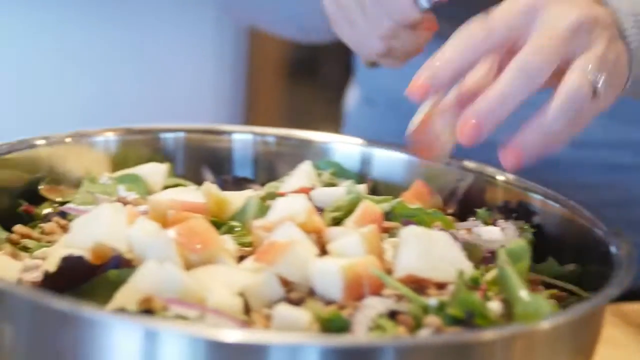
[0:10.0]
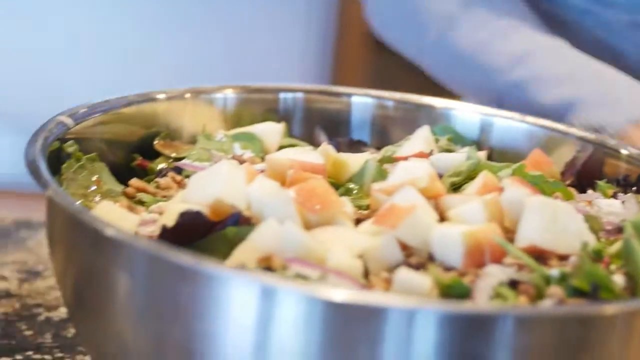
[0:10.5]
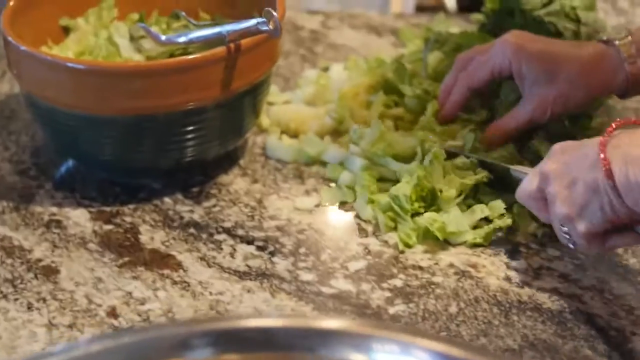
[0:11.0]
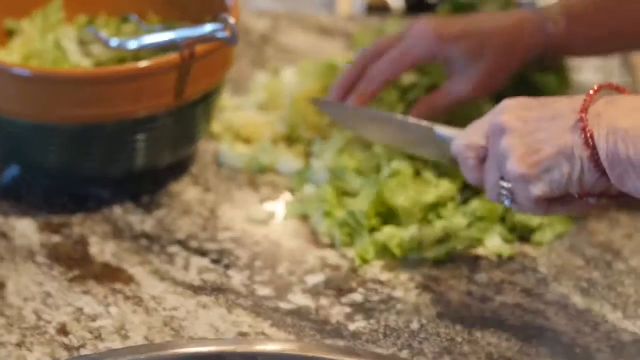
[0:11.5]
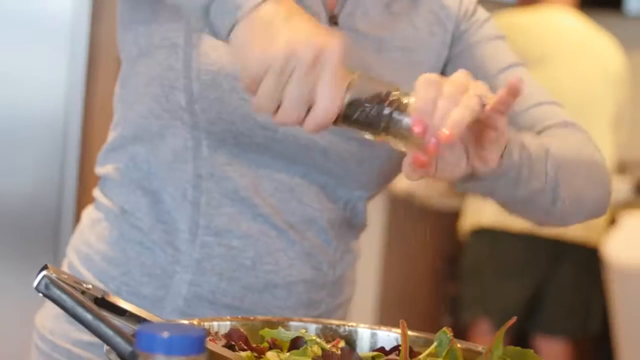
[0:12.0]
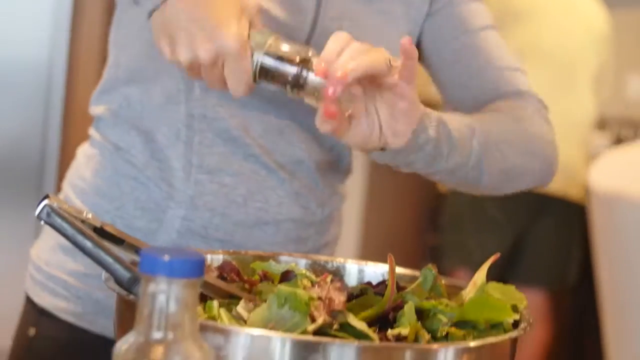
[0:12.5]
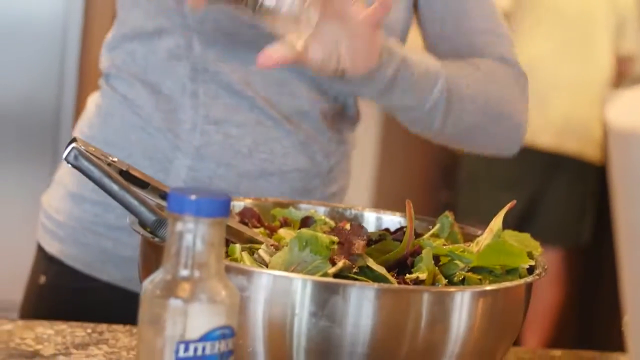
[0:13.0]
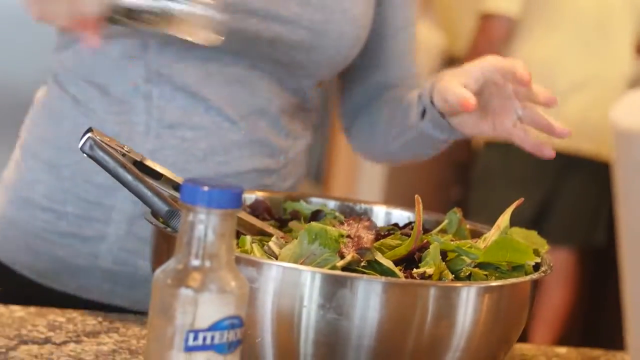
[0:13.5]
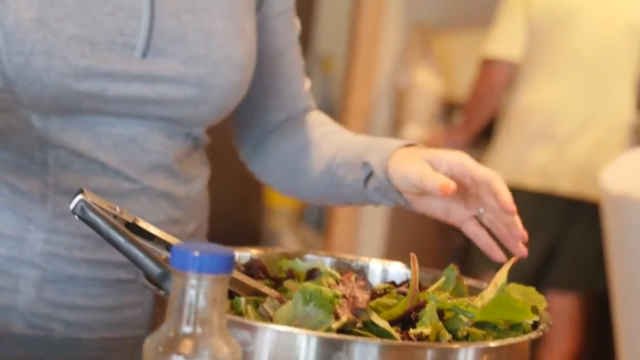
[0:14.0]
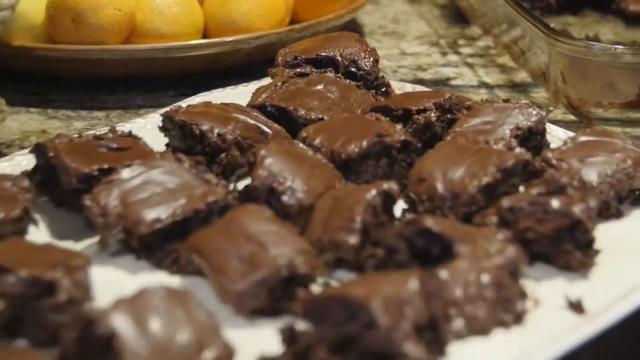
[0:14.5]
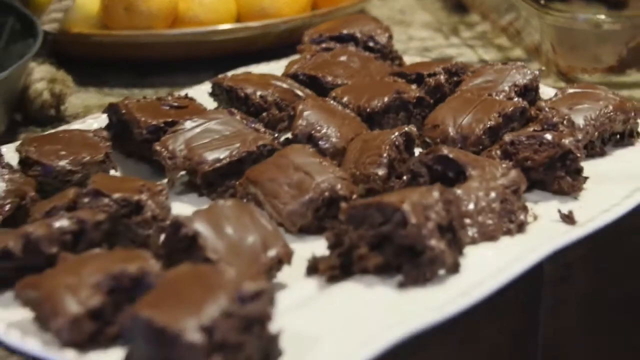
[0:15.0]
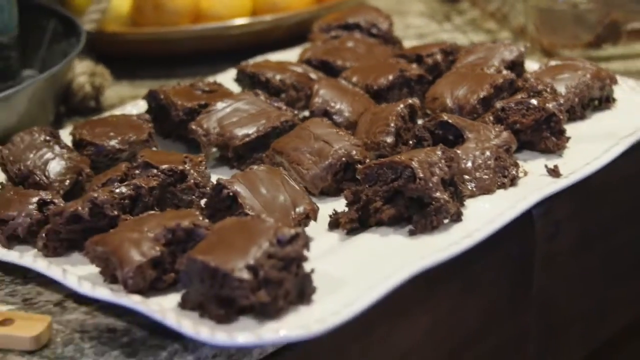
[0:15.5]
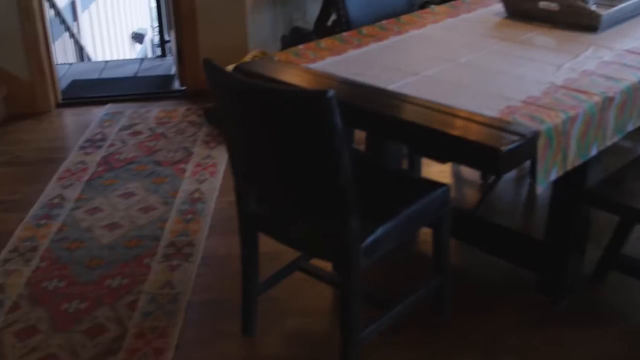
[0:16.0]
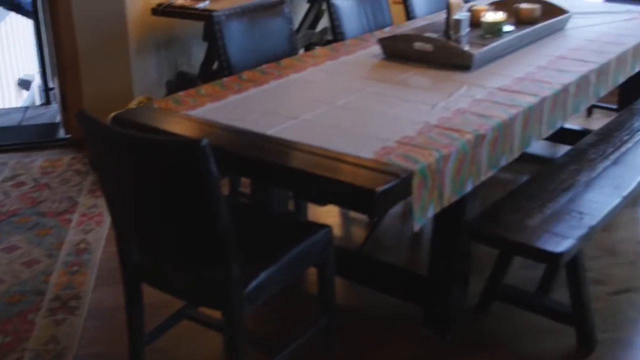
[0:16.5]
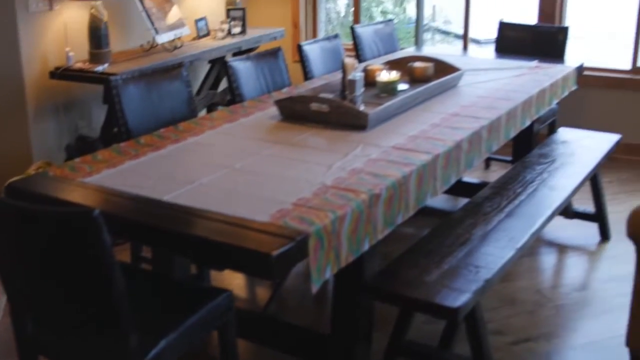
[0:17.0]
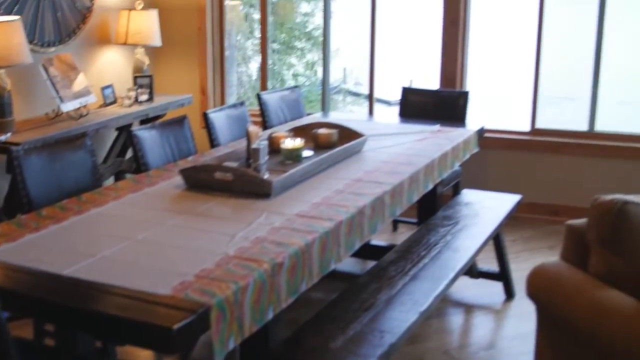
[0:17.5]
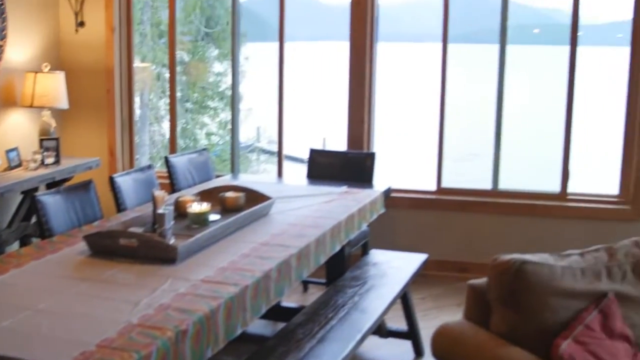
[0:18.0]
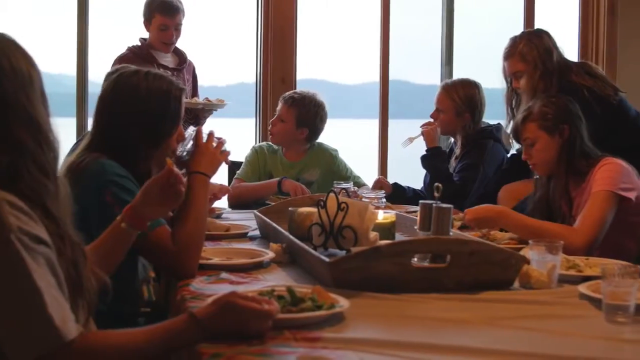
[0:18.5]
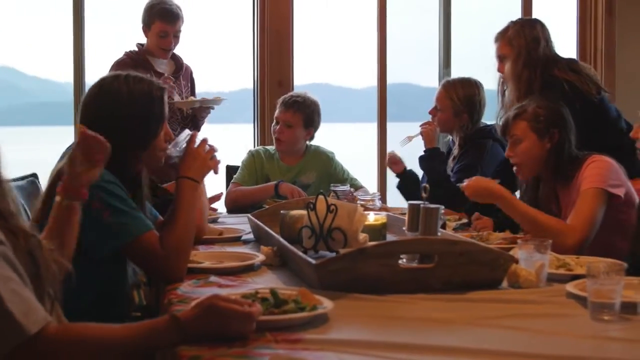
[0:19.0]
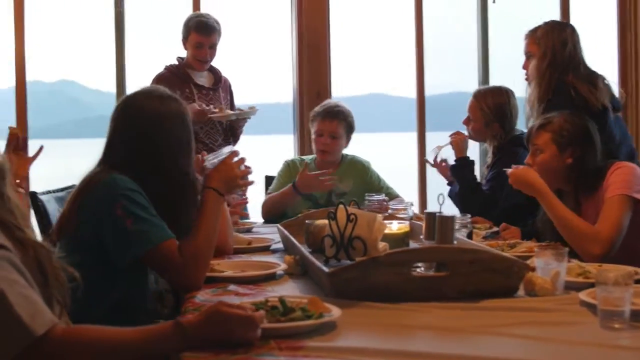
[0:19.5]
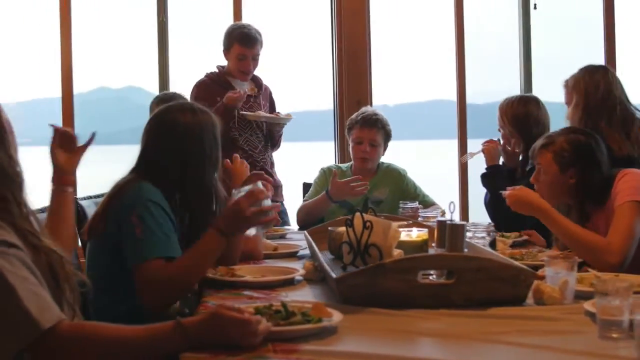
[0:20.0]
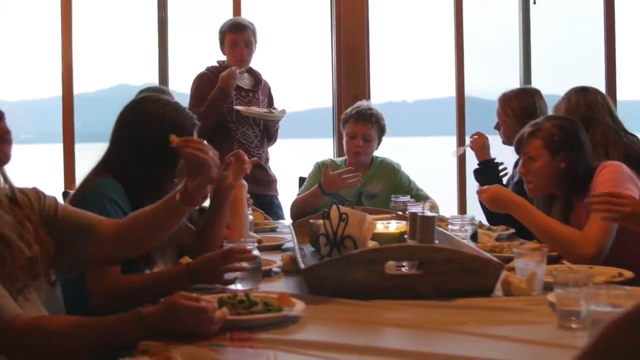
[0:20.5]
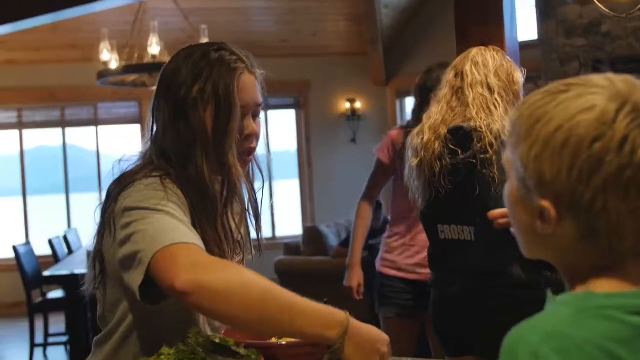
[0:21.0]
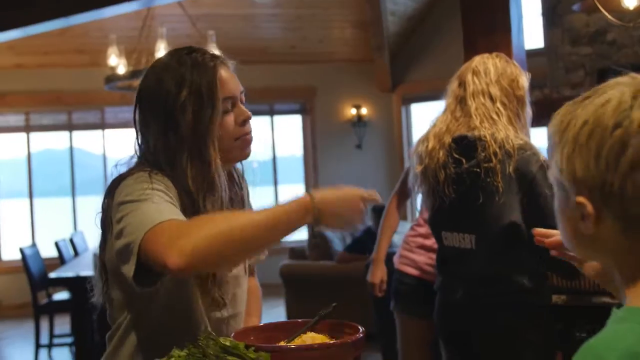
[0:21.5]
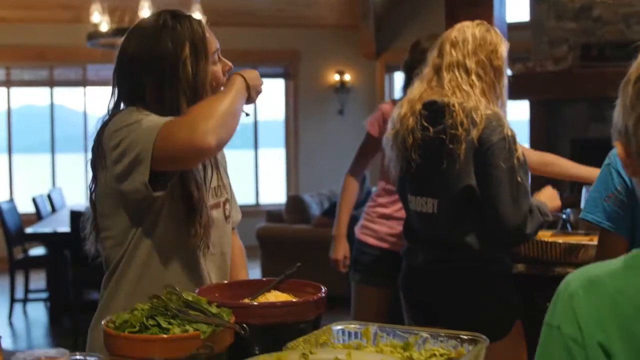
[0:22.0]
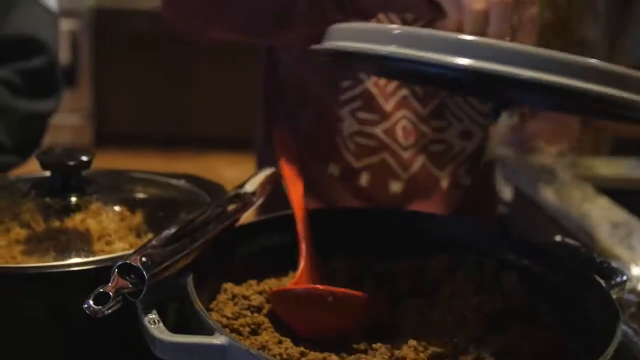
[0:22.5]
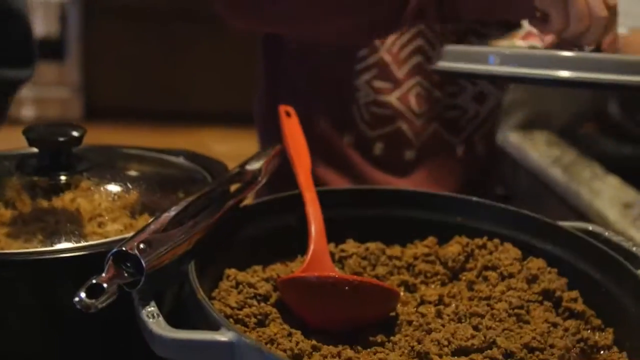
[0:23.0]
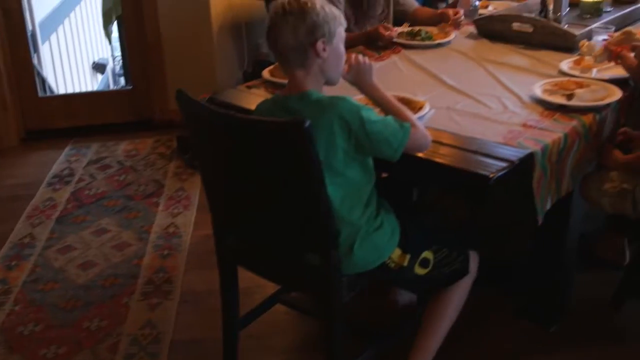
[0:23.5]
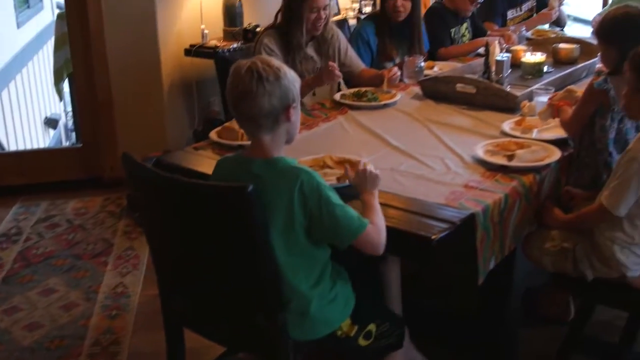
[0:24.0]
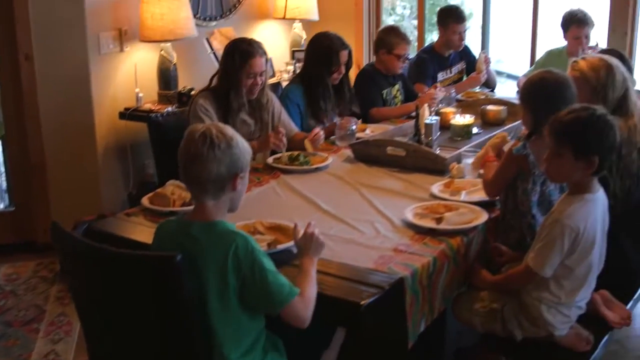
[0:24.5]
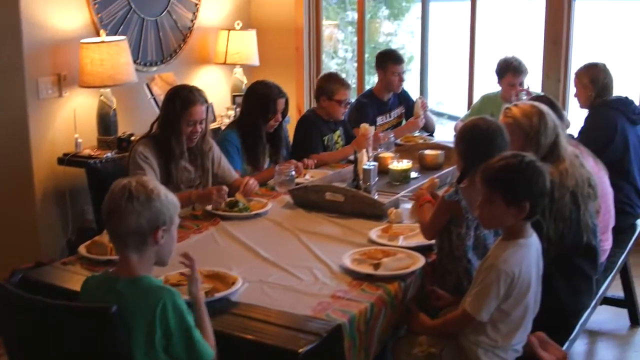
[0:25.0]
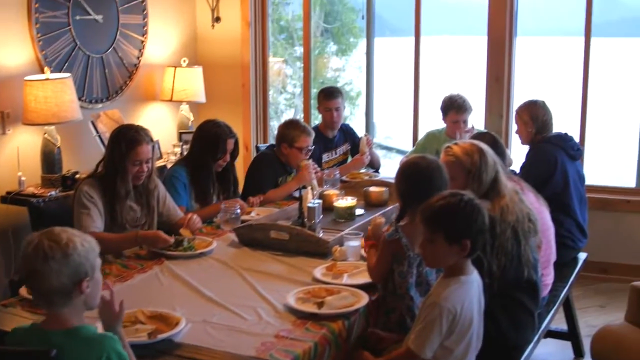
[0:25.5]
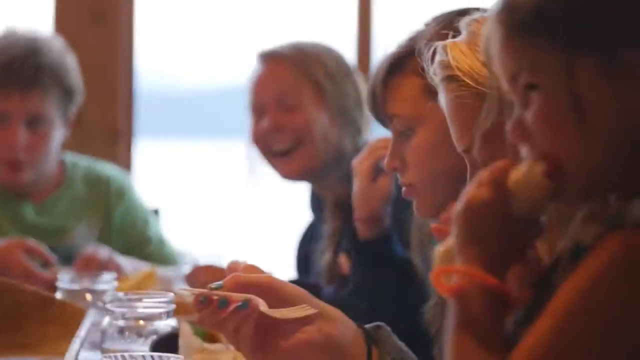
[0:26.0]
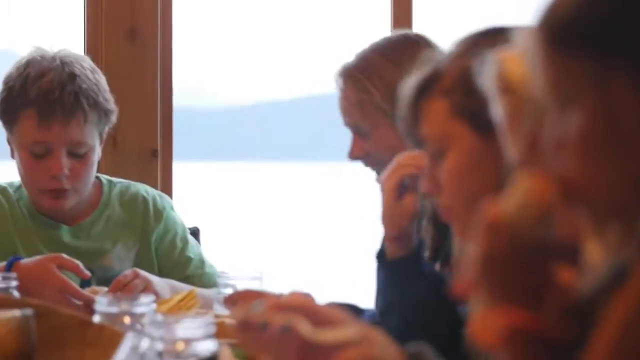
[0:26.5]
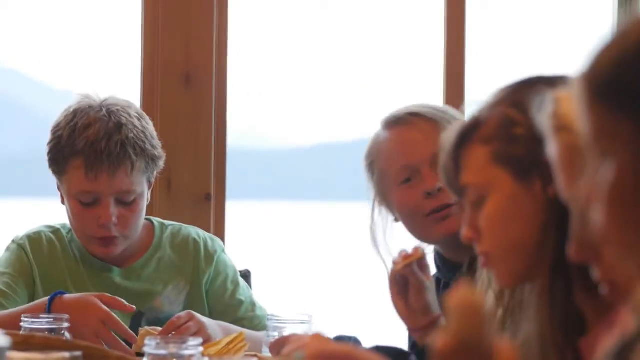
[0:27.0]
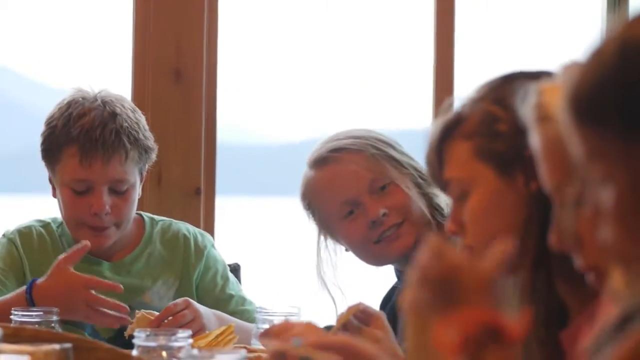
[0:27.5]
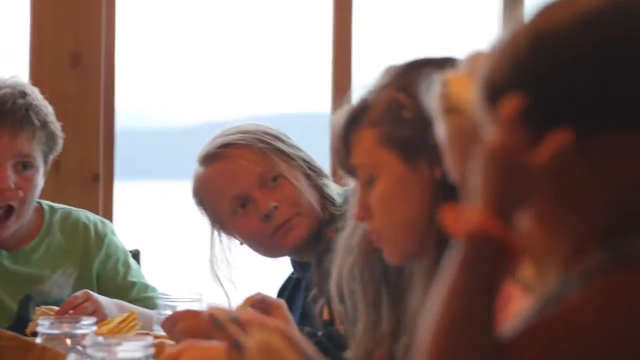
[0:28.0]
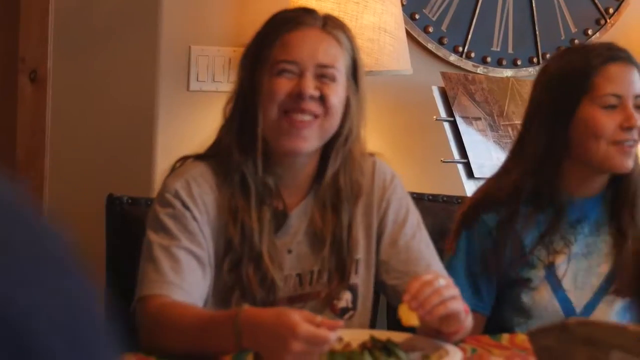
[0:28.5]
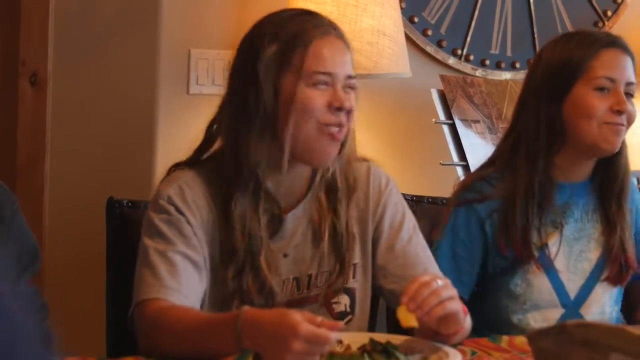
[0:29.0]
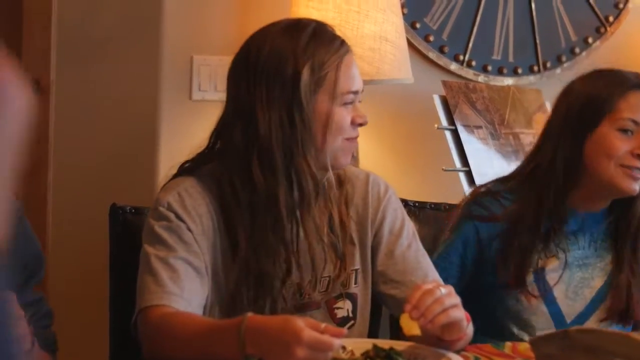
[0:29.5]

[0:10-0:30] She chops lettuce and adds salt and pepper. A tray with brownies appears. Then a long table with a tablecloth is shown beside big windows; outside there is a lake with mountains in the background, and the sky is visible in the daytime. Children, teenagers, are all around the table. In the middle of the table is a tray with napkins, salt and pepper, and each of them has a white plate in front of them. One is standing up with his plate as they eat. Someone takes the lid off the meat, and then the group is back at the table, laughing and having fun as they share the meal. There is a lot of salad, brownies and lemons. They dip chips into the meat, look at each other, smile and joke as they sit at the big long table.